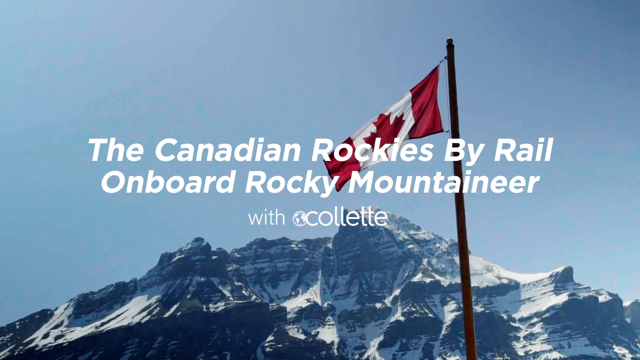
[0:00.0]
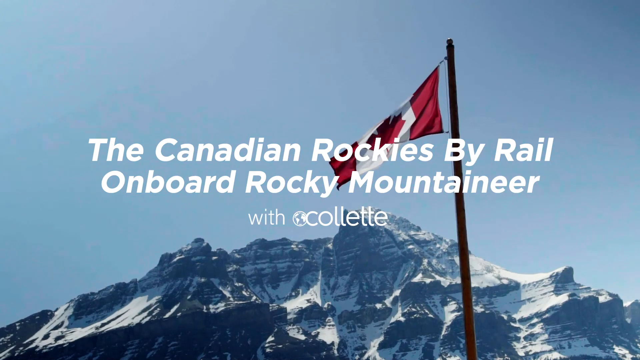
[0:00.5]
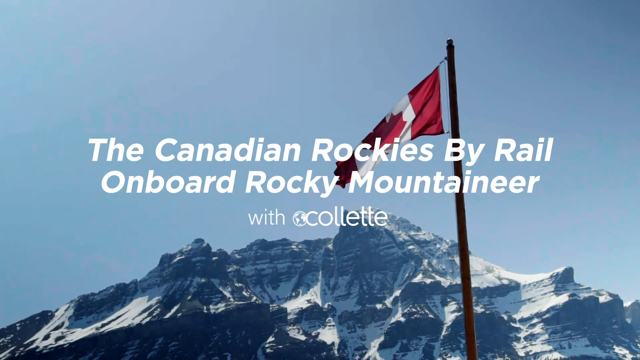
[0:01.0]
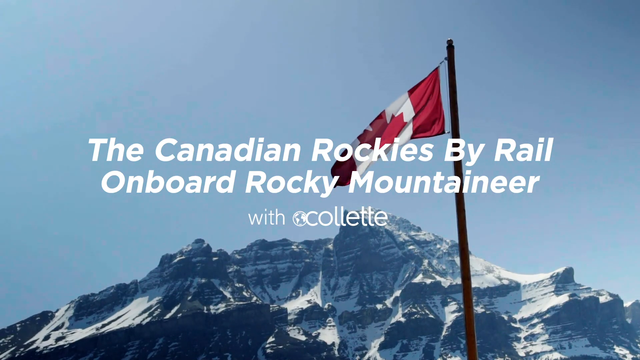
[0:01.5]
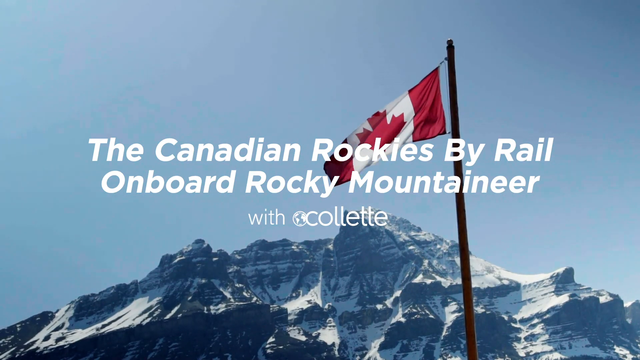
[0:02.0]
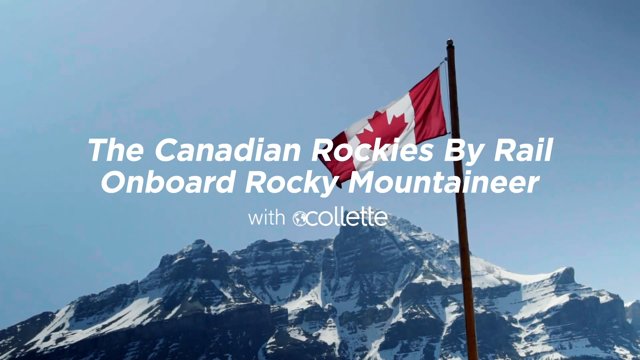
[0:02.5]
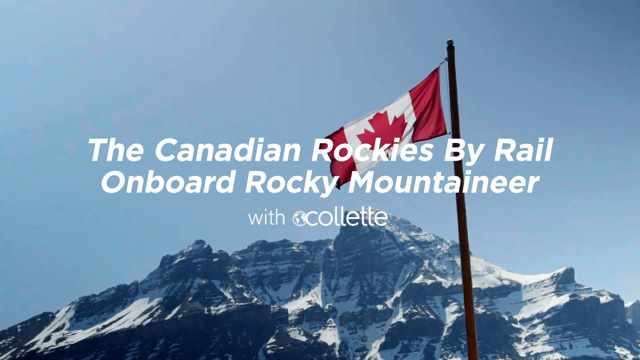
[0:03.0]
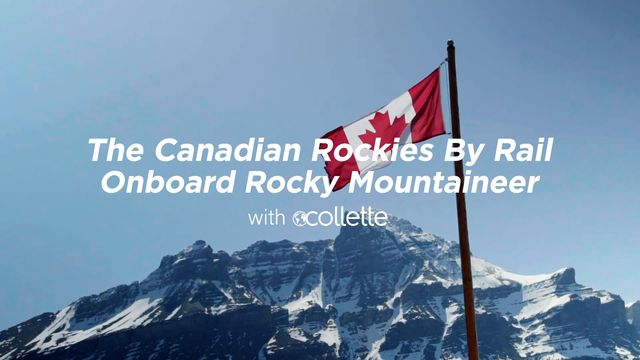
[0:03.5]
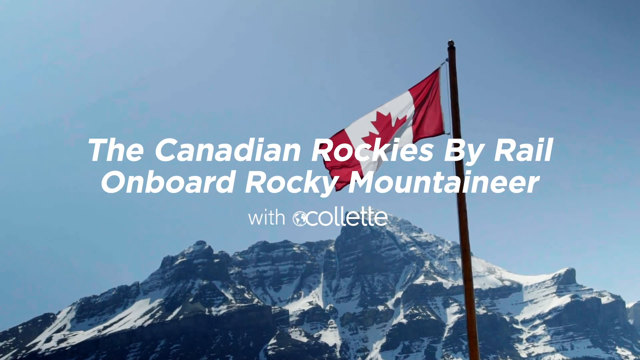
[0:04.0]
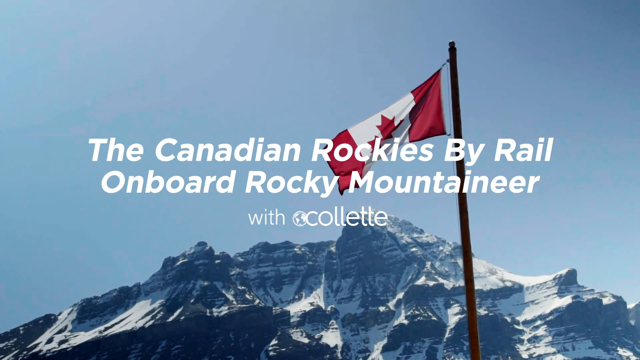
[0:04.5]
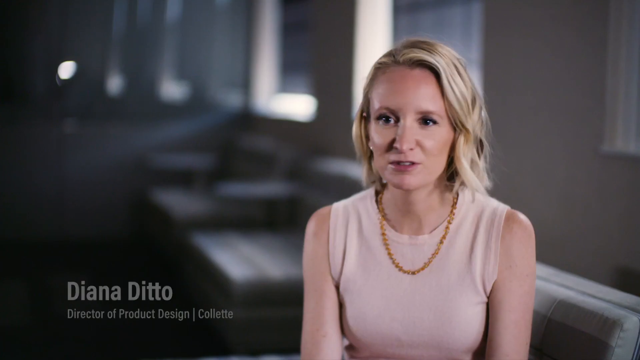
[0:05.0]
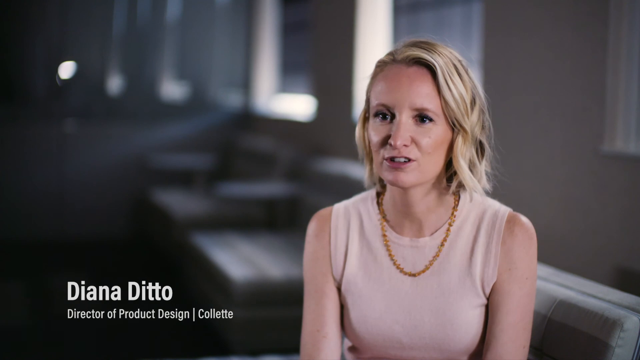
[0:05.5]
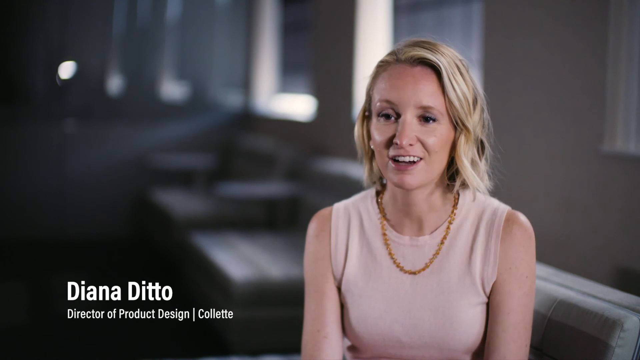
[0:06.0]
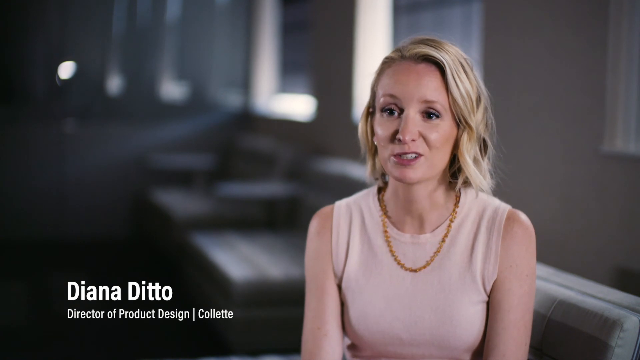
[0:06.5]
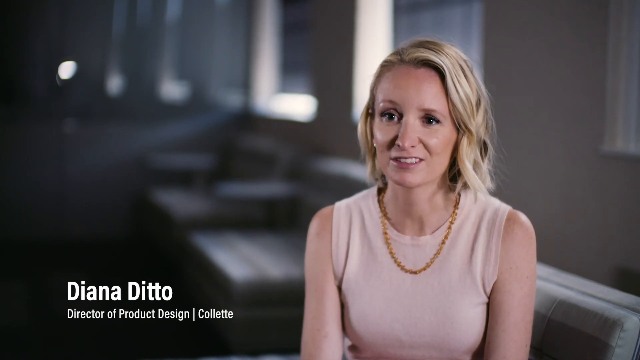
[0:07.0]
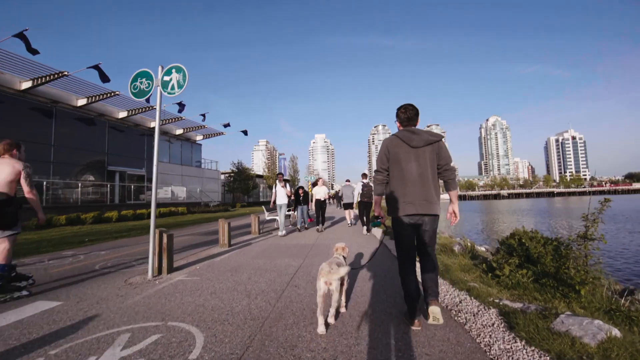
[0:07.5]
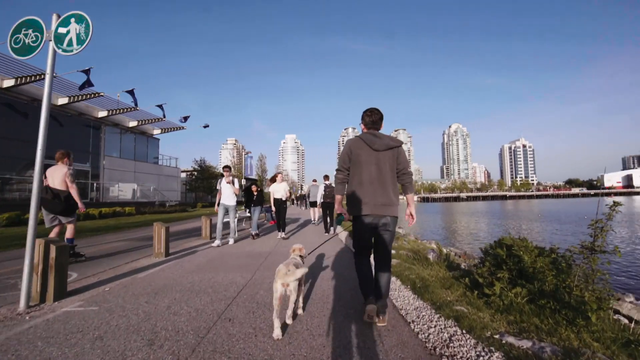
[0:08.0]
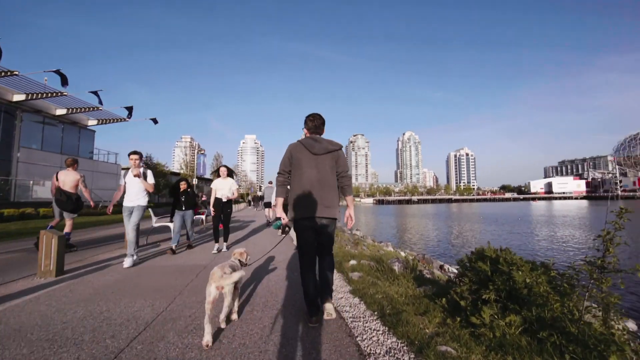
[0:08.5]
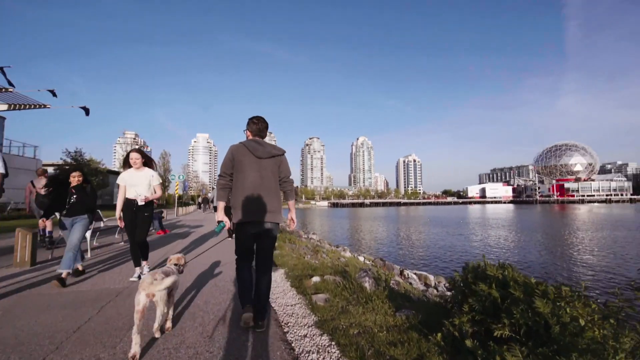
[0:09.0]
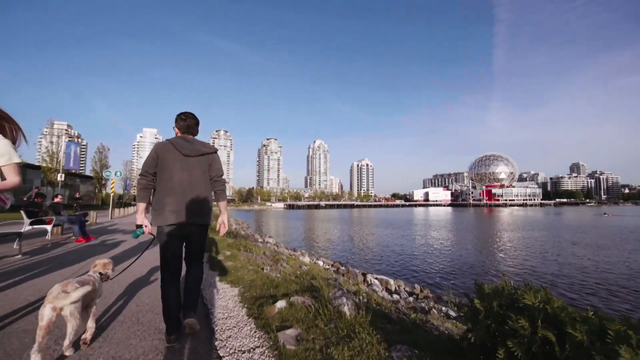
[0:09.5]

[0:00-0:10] The video opens with a graphic that reads "The Canadian Rockies by rail on board Rocky Mountaineer." The backdrop is a mountain with a flagpole flying a Canadian flag, which moves somewhat in the breeze. The shot changes to a blonde, very skinny woman indoors who is talking; she is smiling and says just a few words. The video then returns outside to a riverfront pedestrian walk path with a lot of people. In front of the camera, a man walks his dog on a leash. The camera pans somewhat to the right, revealing other people and buildings in the distance.